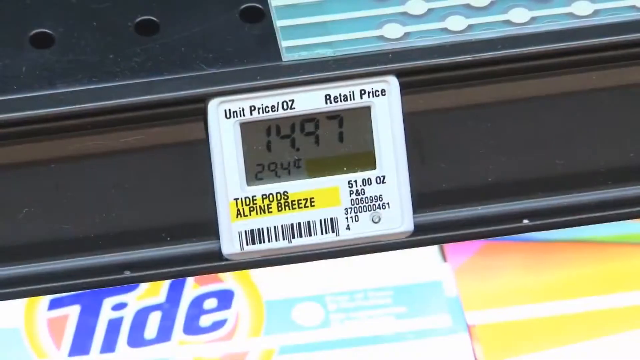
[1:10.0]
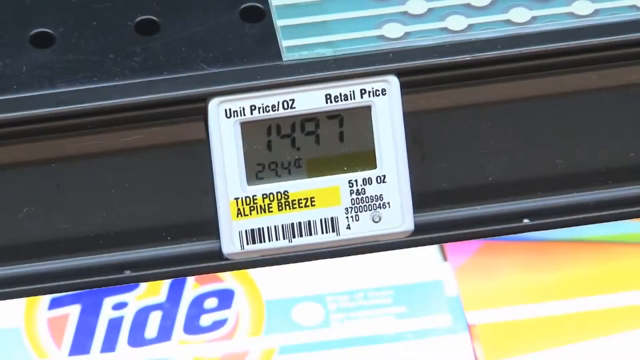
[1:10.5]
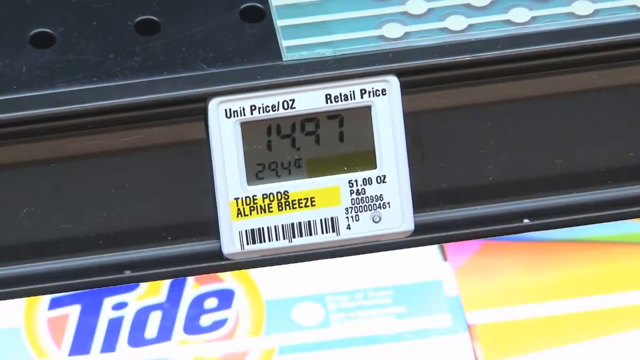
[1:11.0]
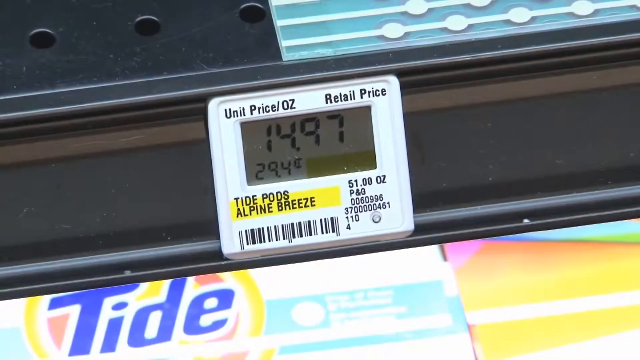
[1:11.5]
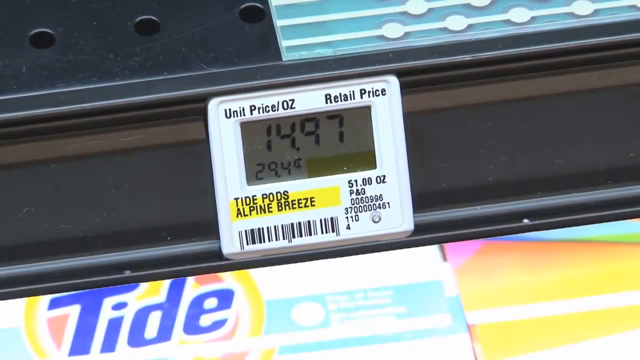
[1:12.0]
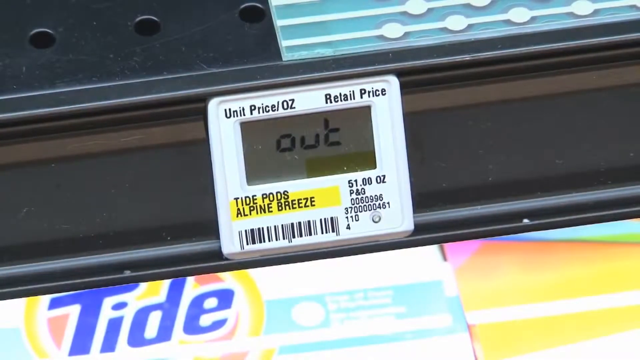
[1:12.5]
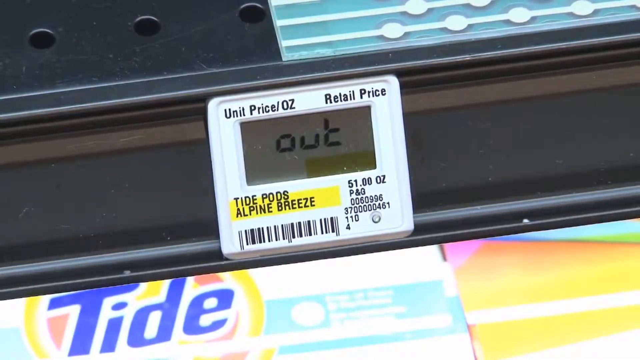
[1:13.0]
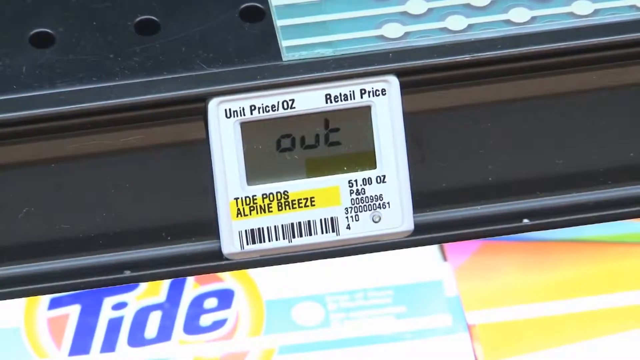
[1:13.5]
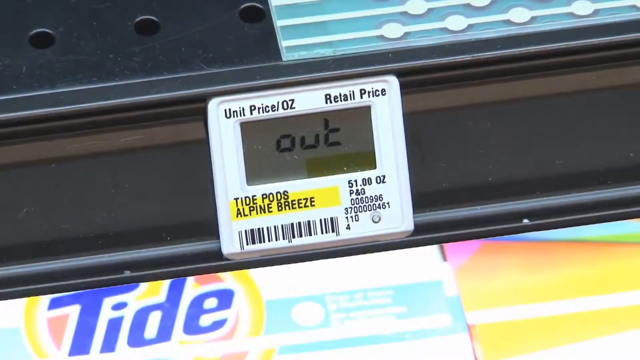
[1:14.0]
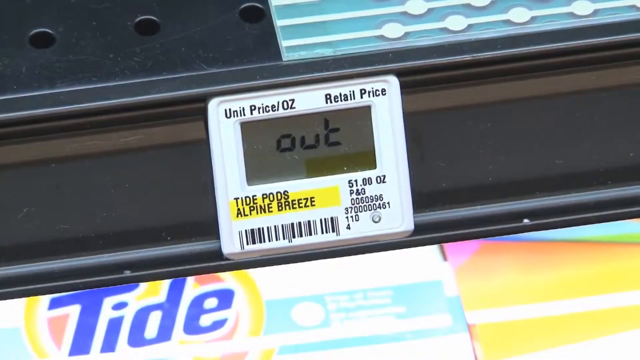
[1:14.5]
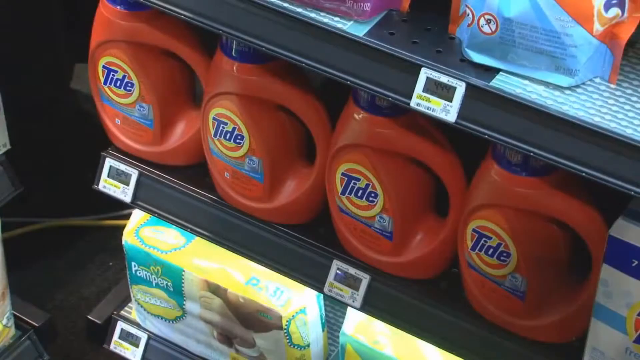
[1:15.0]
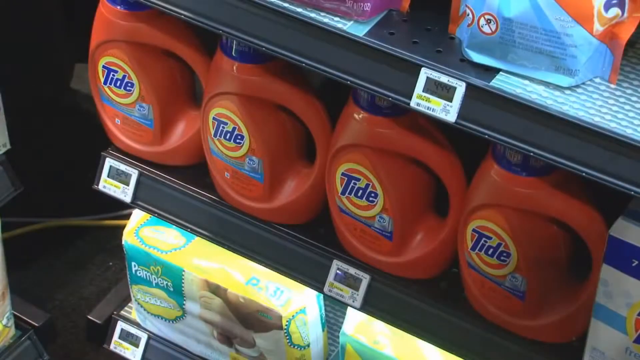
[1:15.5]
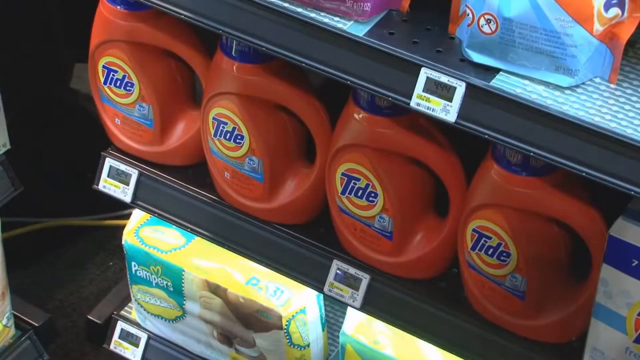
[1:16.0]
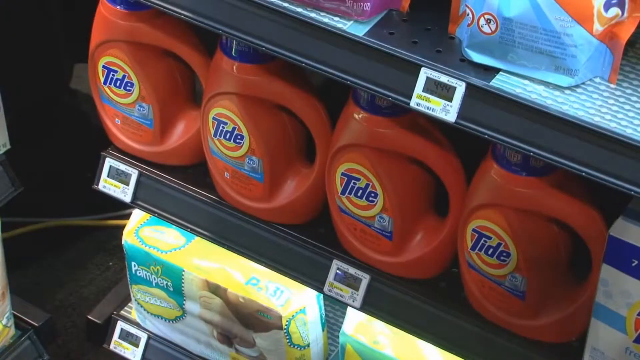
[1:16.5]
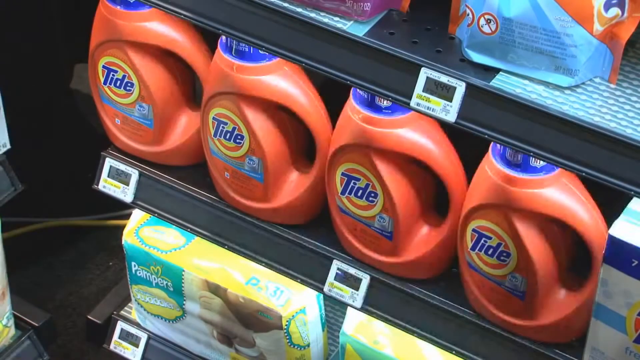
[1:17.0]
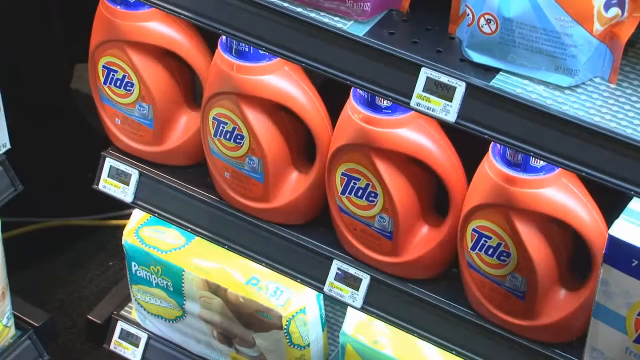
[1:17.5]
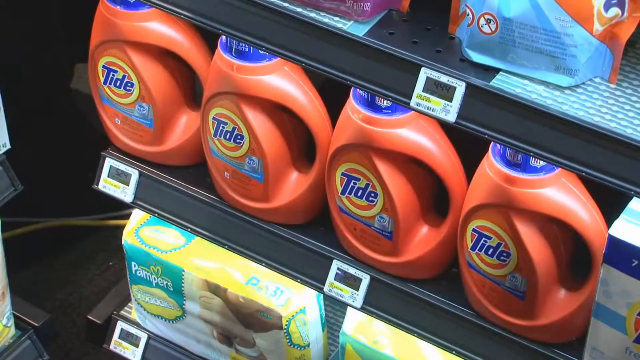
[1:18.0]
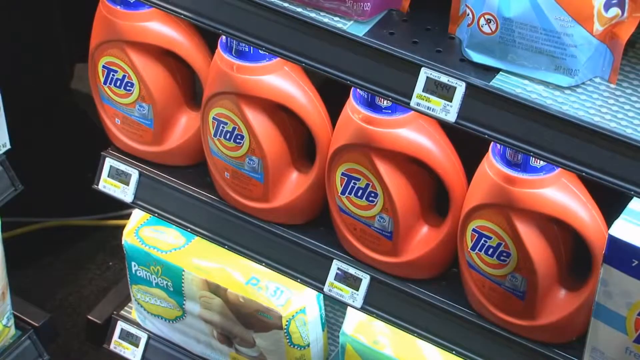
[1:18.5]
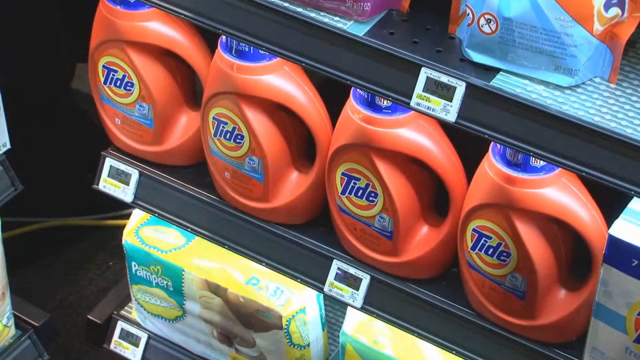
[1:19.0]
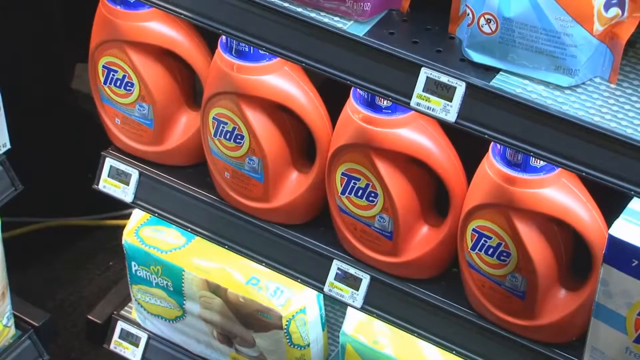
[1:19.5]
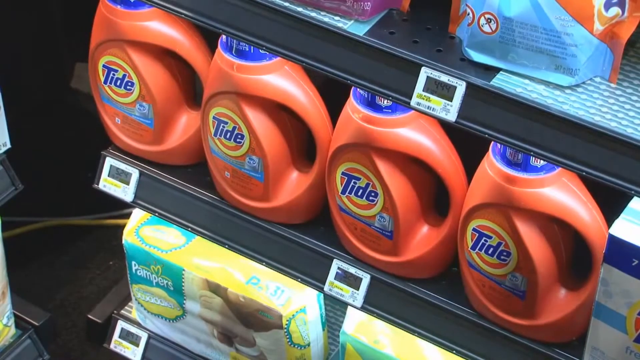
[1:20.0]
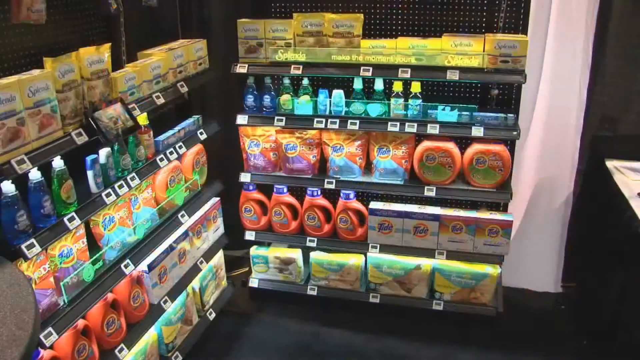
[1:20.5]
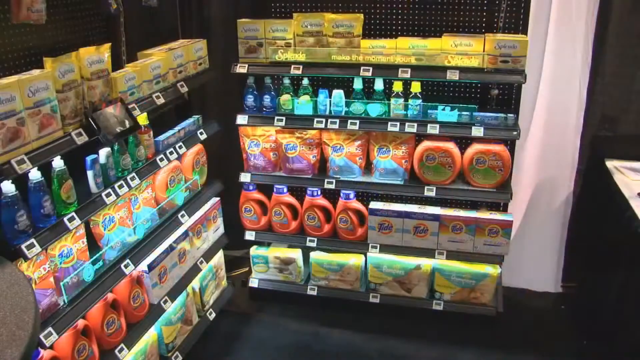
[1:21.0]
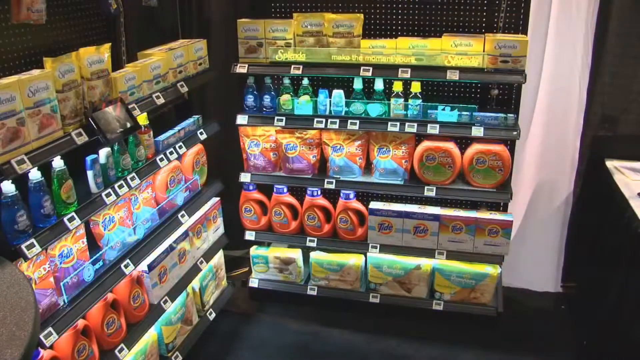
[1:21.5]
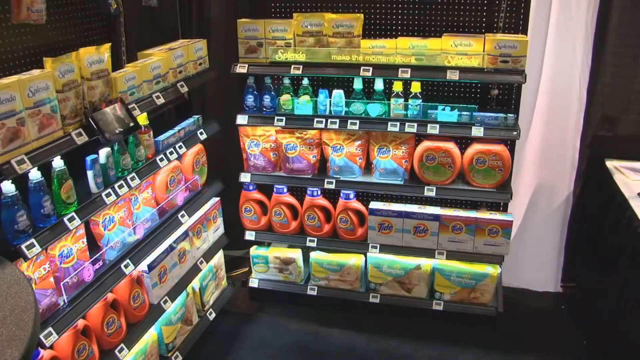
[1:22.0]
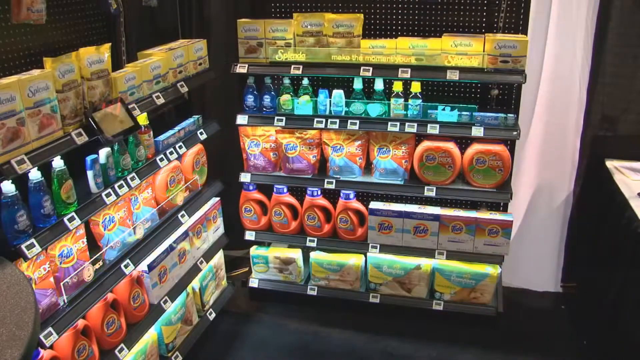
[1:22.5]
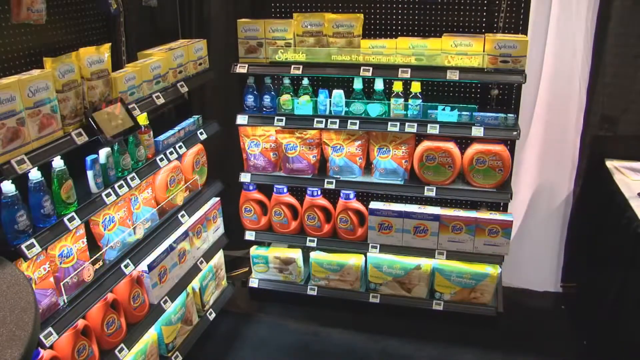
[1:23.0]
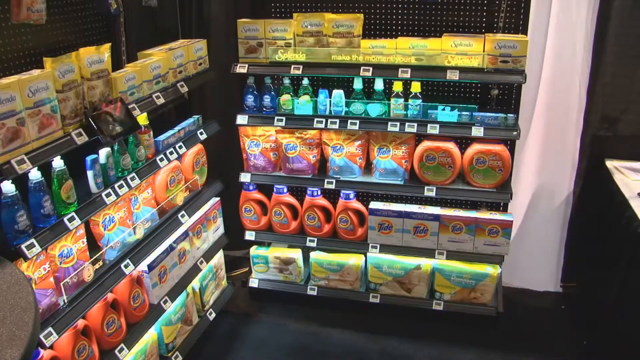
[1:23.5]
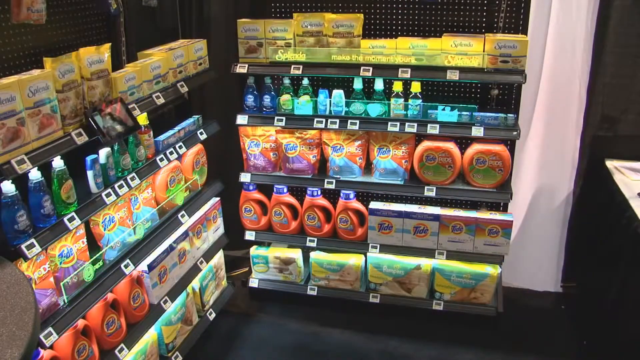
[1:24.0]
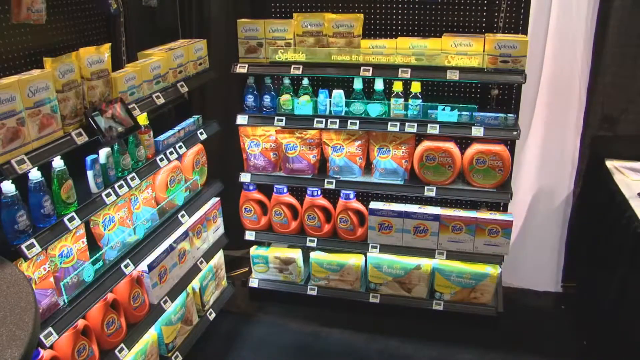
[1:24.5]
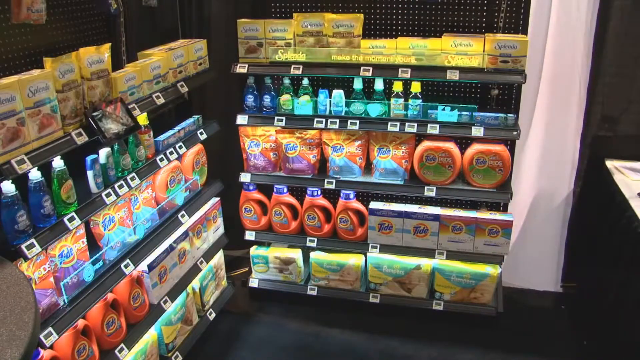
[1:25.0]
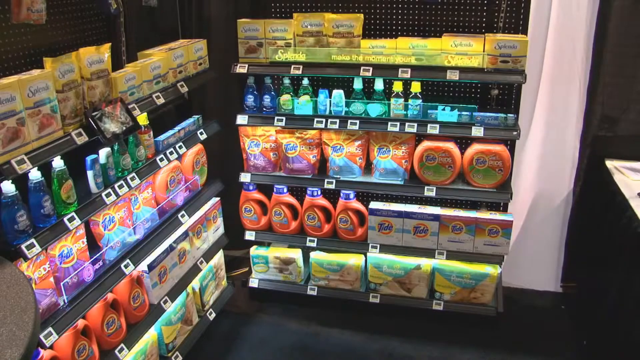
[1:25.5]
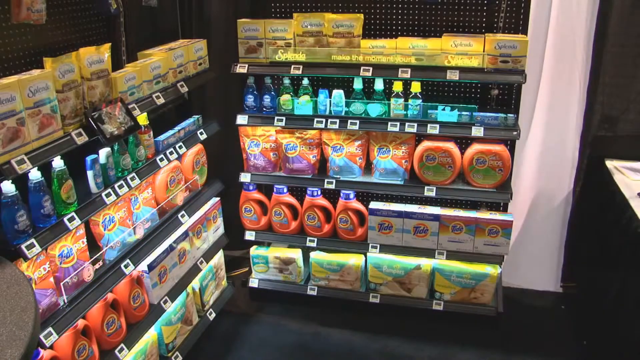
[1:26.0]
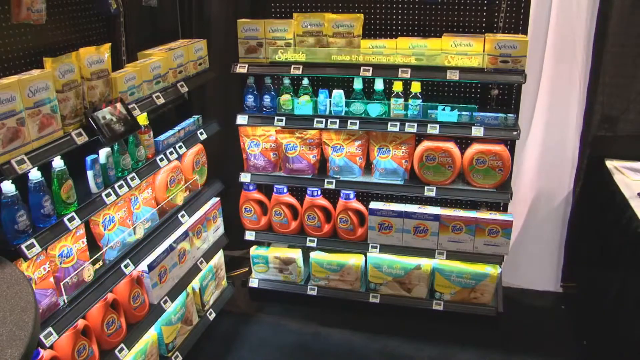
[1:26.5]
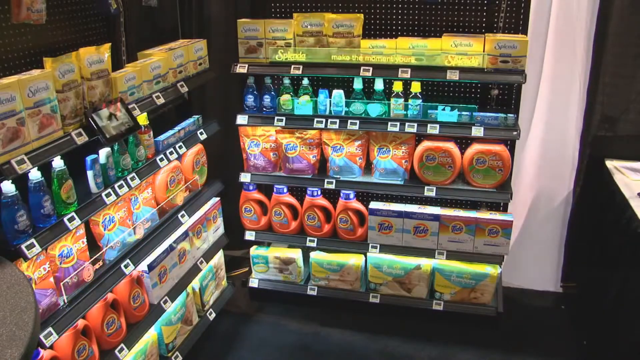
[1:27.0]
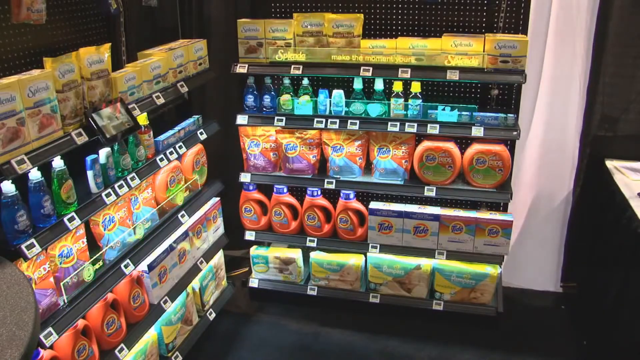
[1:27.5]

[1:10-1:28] One of the price labels on the side of a shelf is shown. Its small screen says "14.97" and beneath that "Tide Pods Alpine Breeze". The small screen then changes to the word "out", likely meaning the item is out of stock. The entire ad seems to be for these small end caps placed at the ends of shelves to indicate whether products are out of stock or in stock. Several items are on the shelves, including bottles of Tide, and the lights flicker somewhat. The video then transitions to a zoomed-out image of all the items on the two shelves, where in the back some of the lights on one of the shelves are flickering. It seems to end on this image of both shelves with the lights flickering on the top right shelf, which has boxes of Splenda on top.